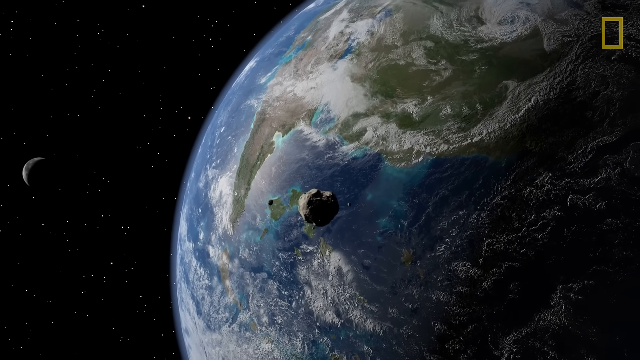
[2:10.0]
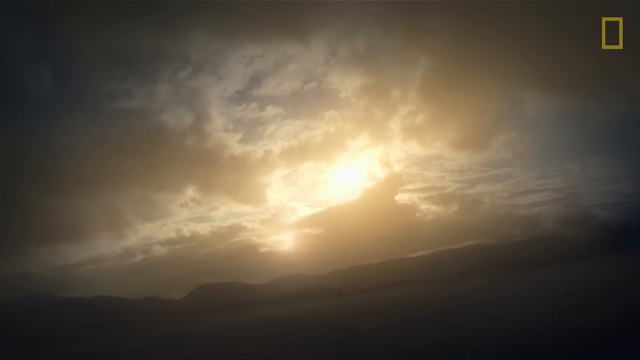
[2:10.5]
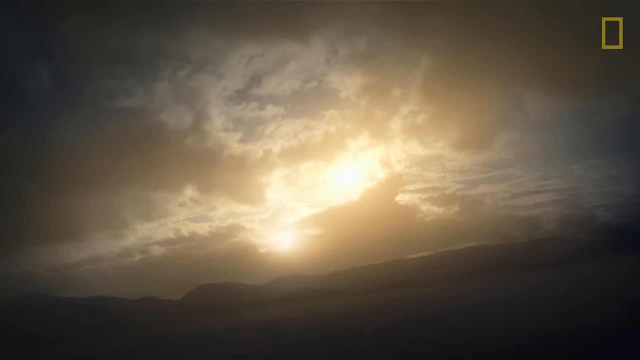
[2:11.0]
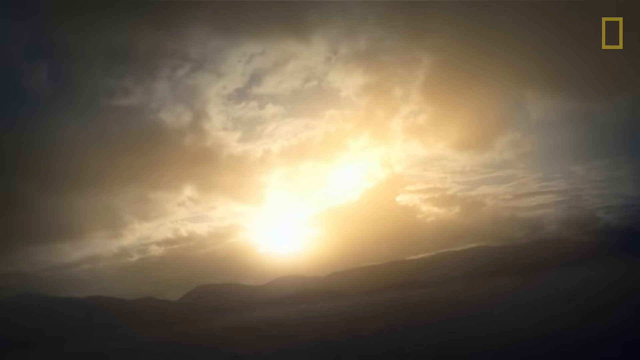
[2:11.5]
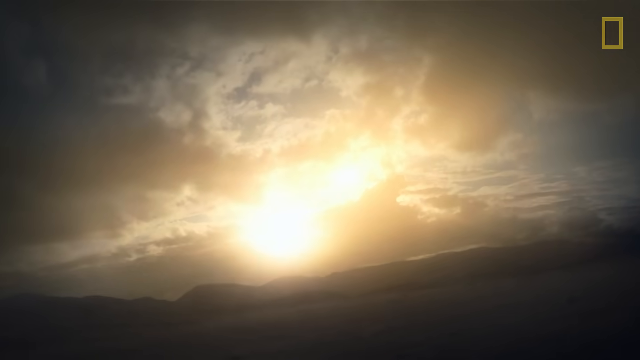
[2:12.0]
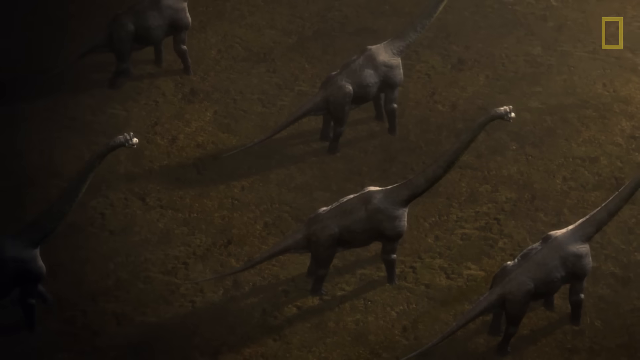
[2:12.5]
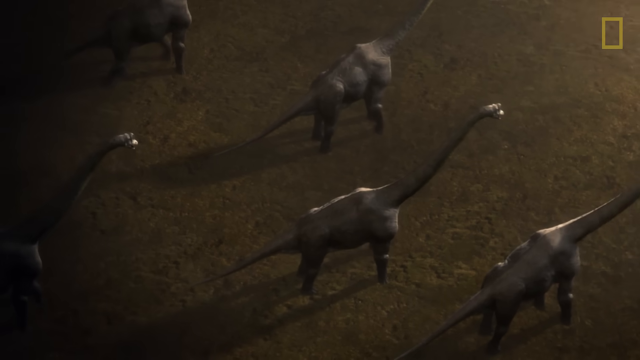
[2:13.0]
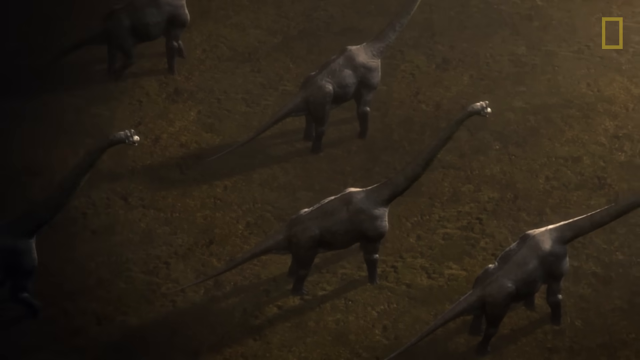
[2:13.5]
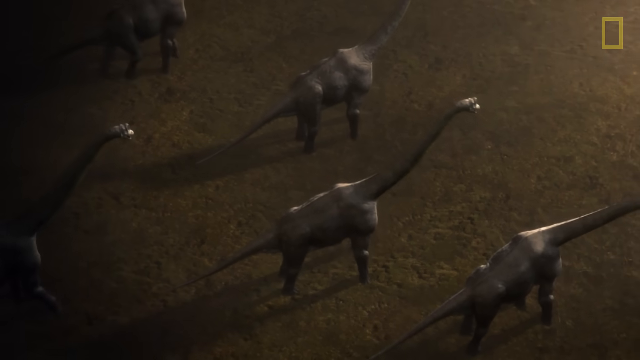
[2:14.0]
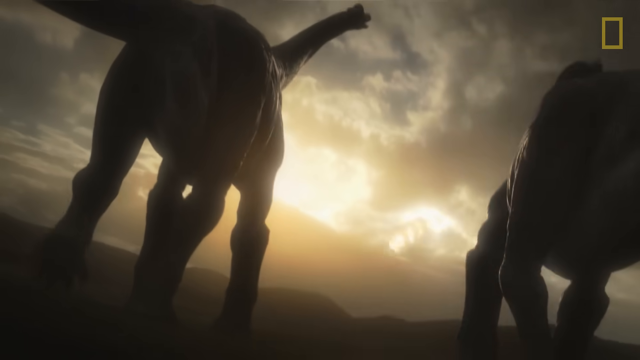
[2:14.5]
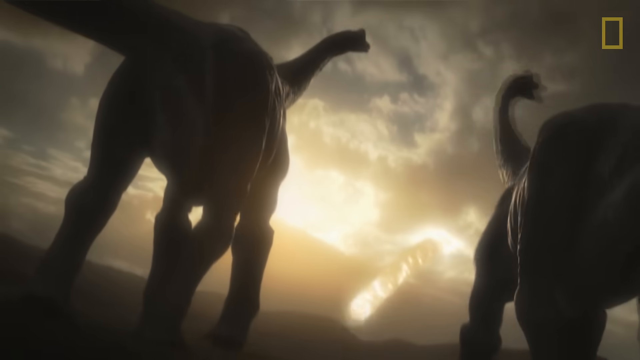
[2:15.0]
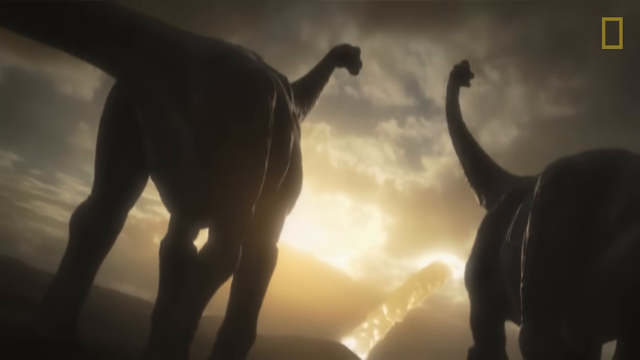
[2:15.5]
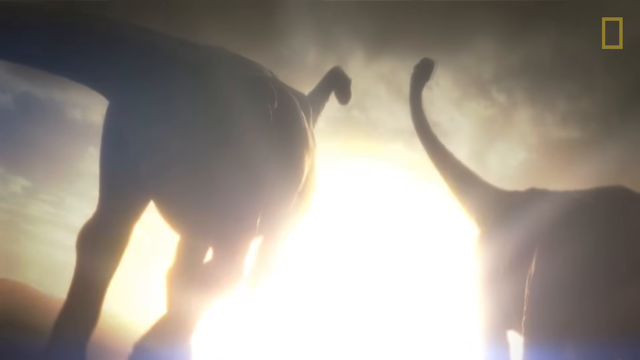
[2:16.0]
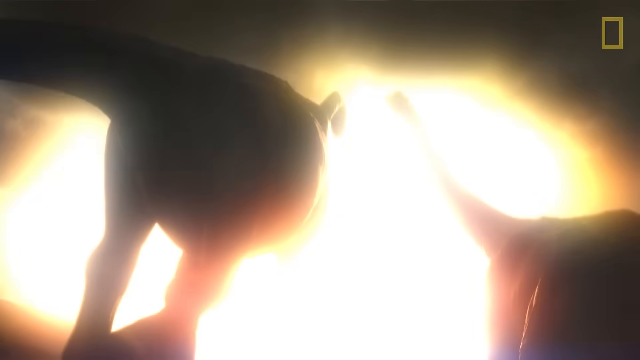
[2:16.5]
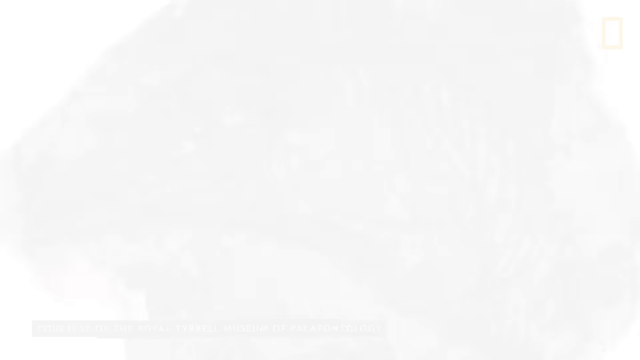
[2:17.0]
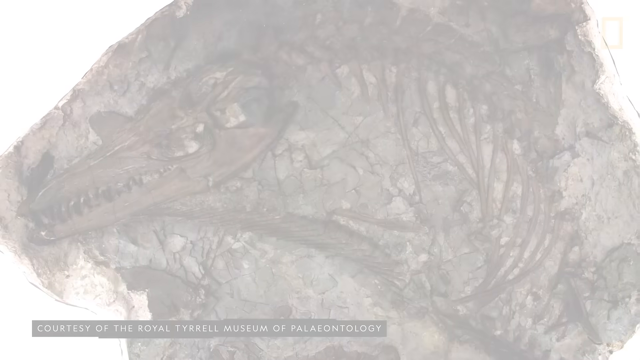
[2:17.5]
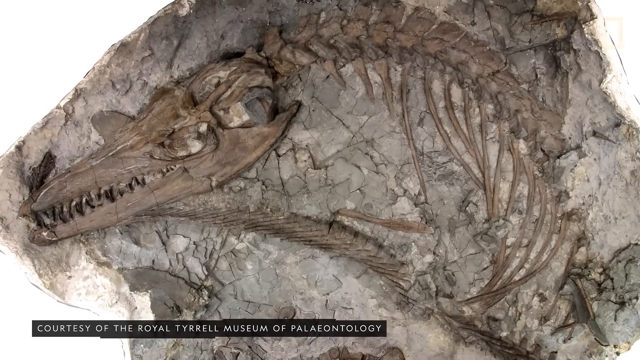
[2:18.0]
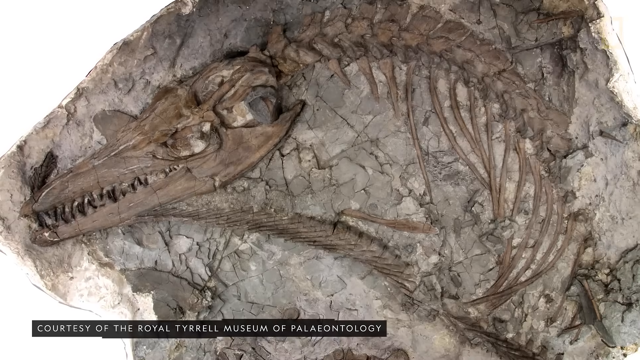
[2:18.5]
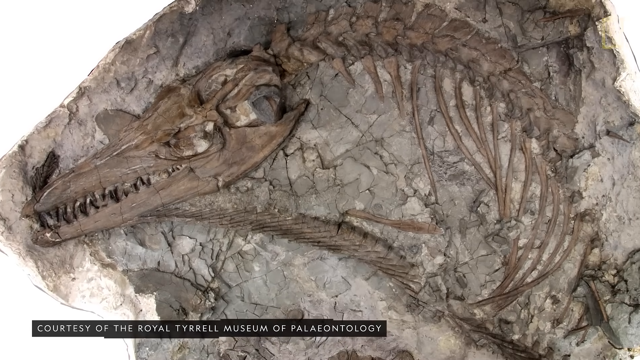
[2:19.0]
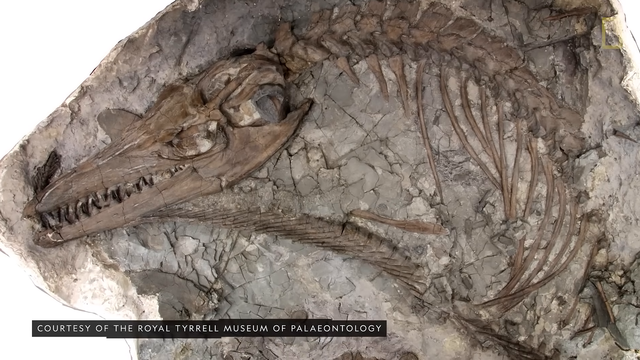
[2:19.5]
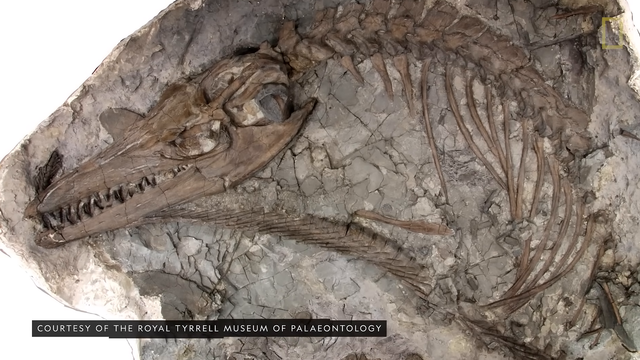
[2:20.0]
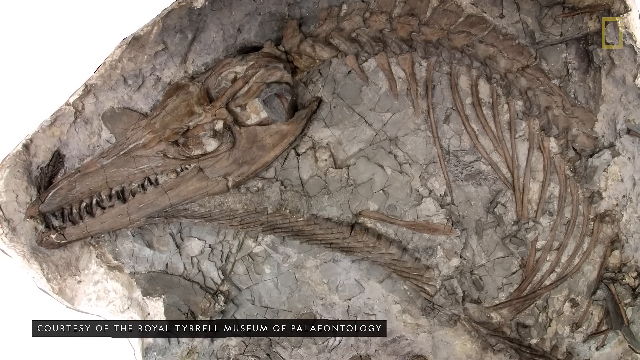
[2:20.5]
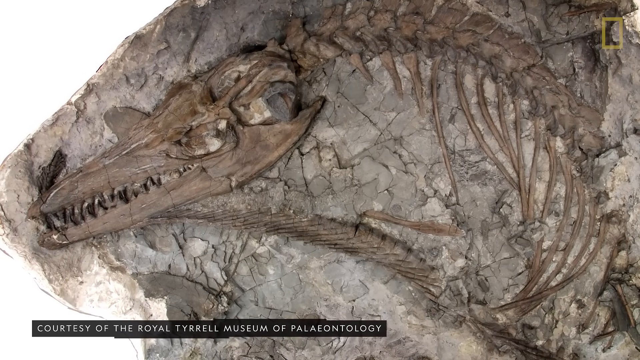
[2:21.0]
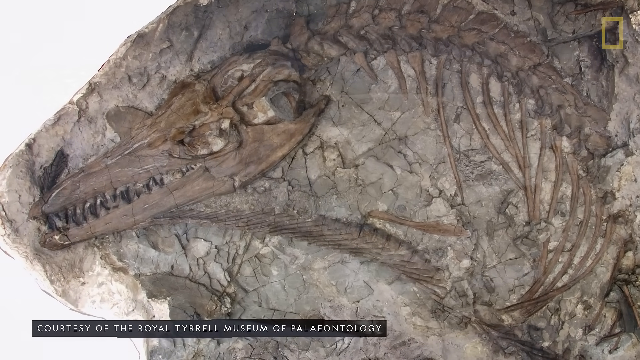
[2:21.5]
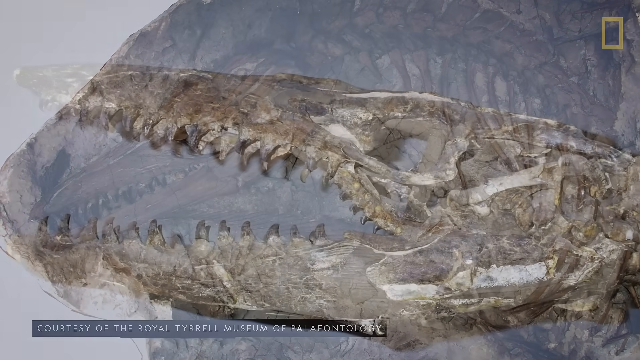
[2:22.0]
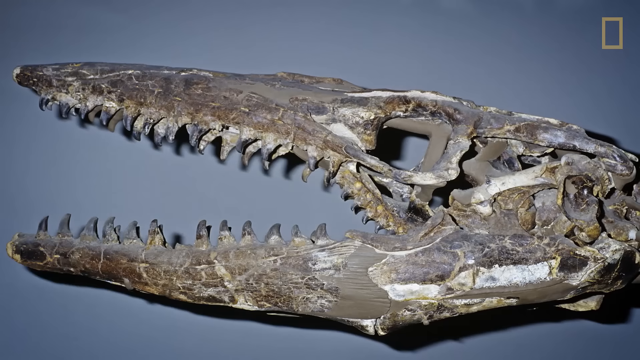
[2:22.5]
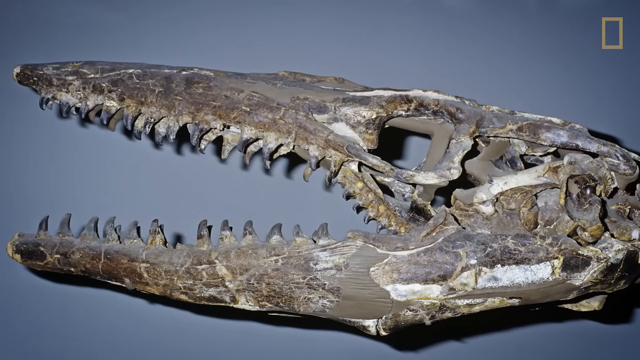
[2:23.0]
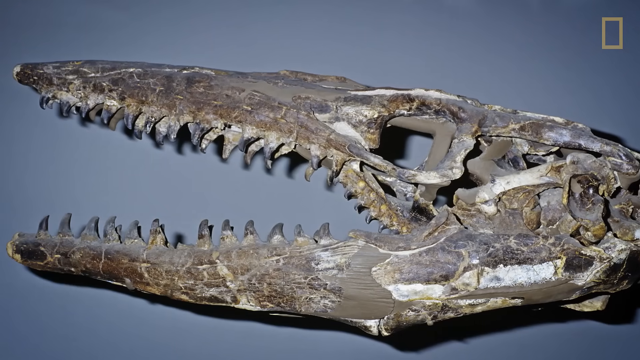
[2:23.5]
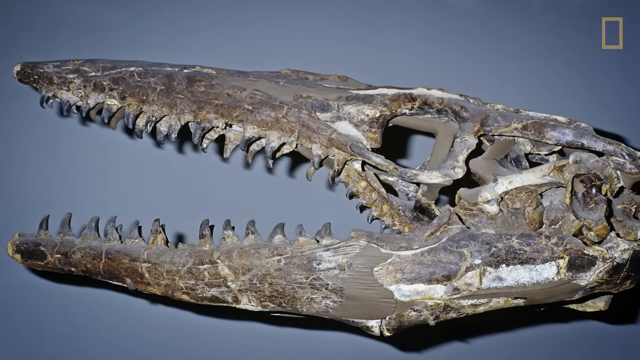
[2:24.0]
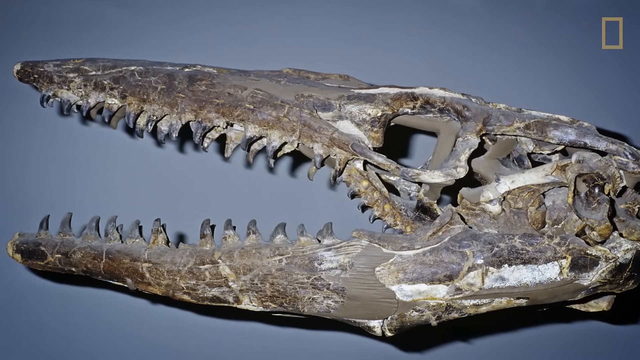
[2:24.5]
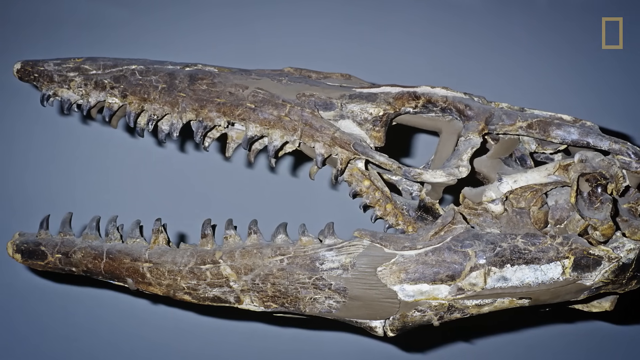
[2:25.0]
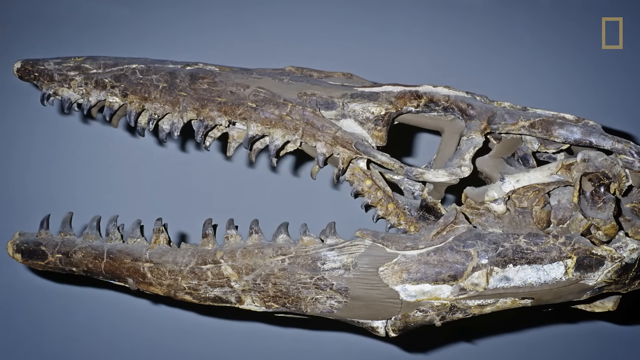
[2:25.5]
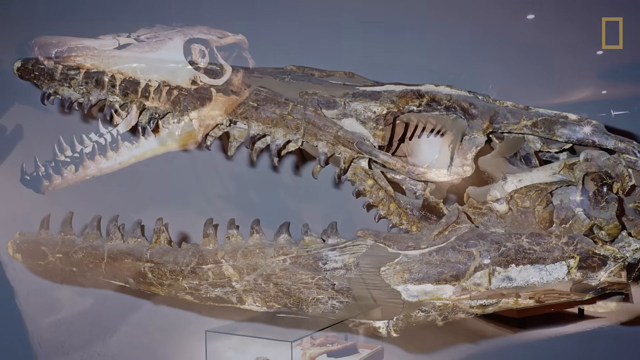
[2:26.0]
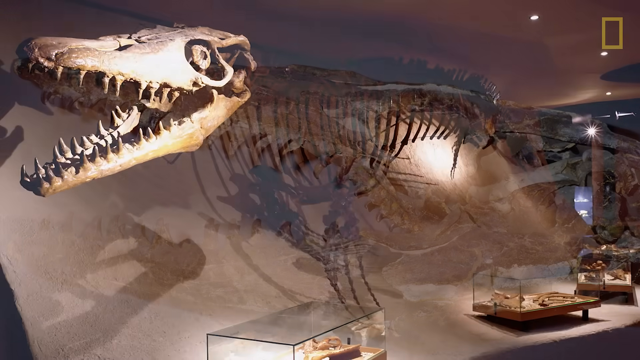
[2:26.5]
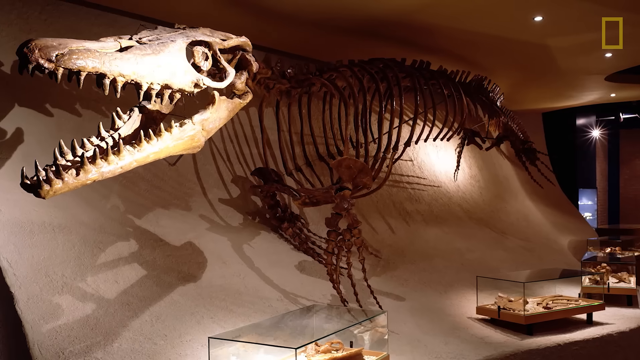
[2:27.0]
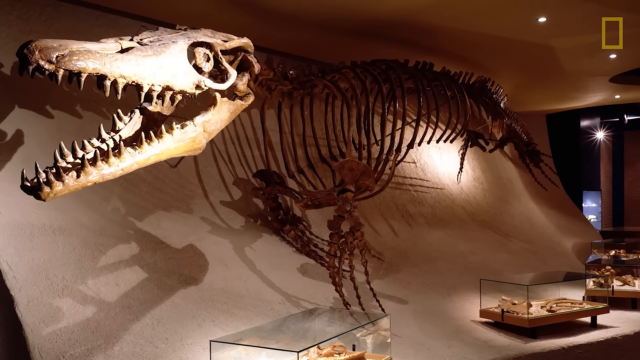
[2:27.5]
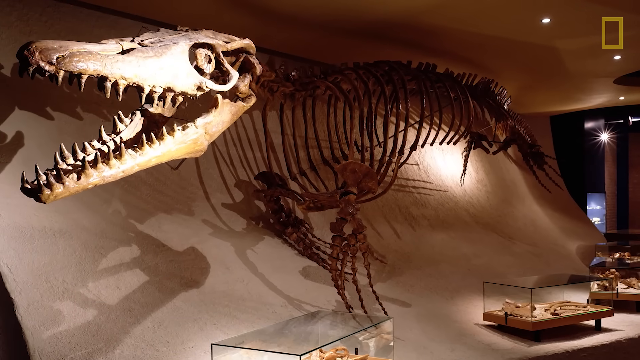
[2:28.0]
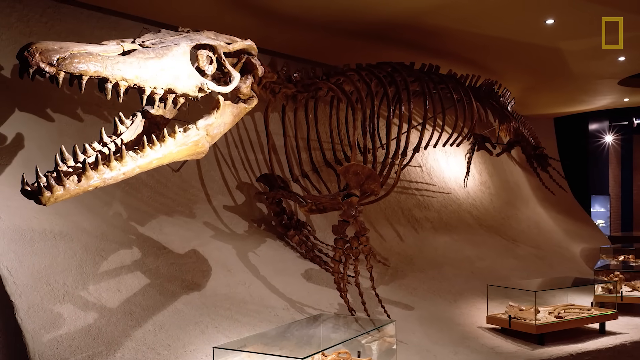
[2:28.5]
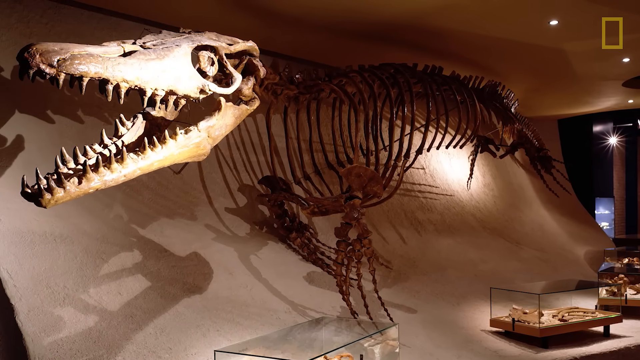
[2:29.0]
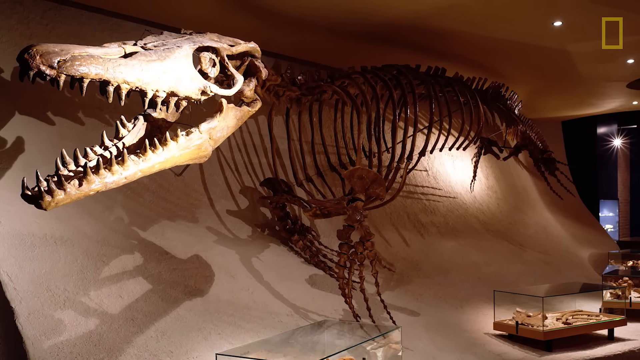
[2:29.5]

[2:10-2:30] Many animals appear, seemingly very large ones. After that, something is shown about to hit the planet, the world.